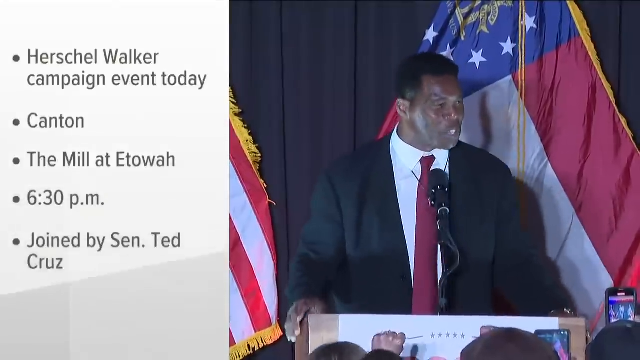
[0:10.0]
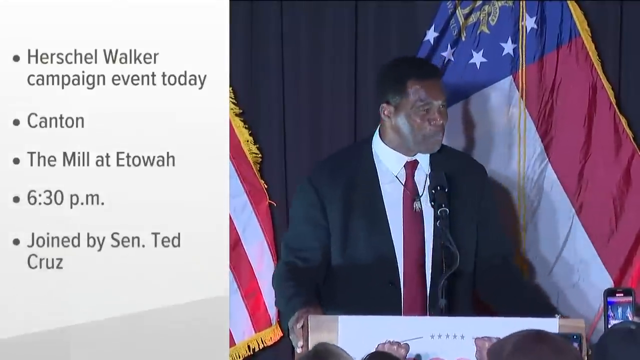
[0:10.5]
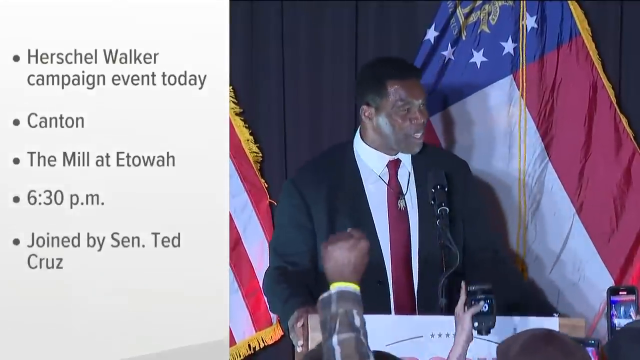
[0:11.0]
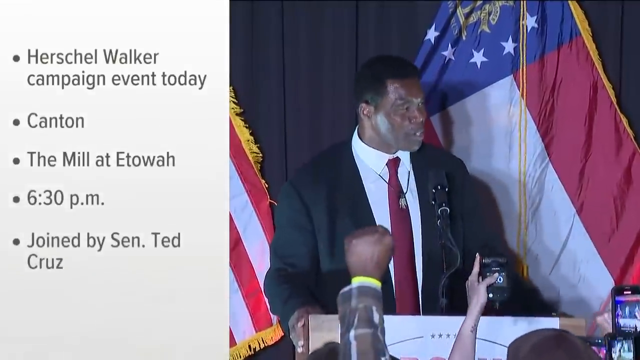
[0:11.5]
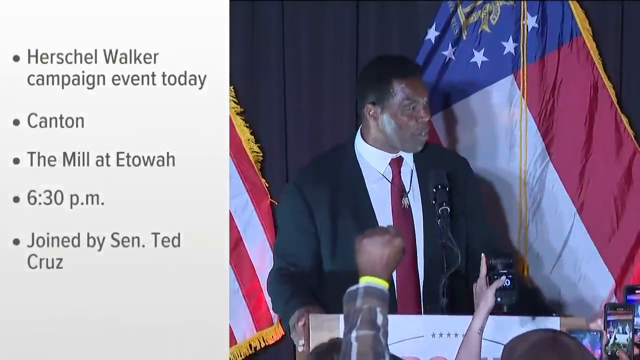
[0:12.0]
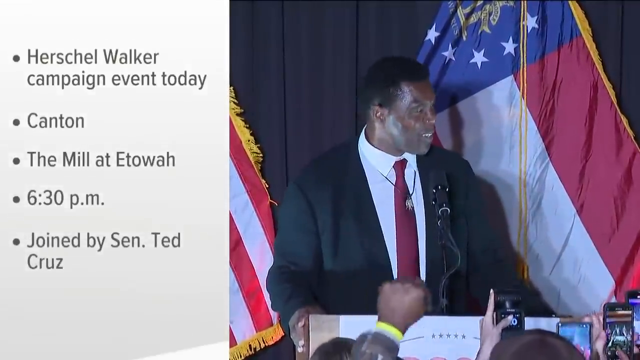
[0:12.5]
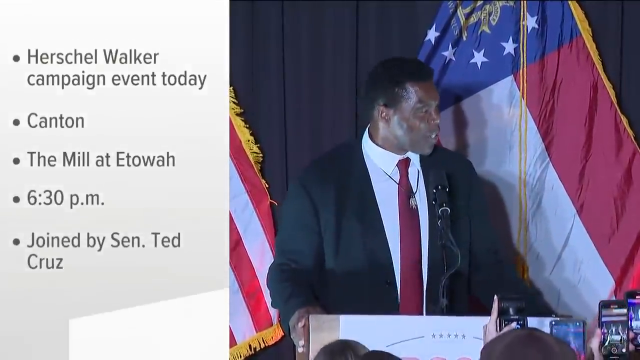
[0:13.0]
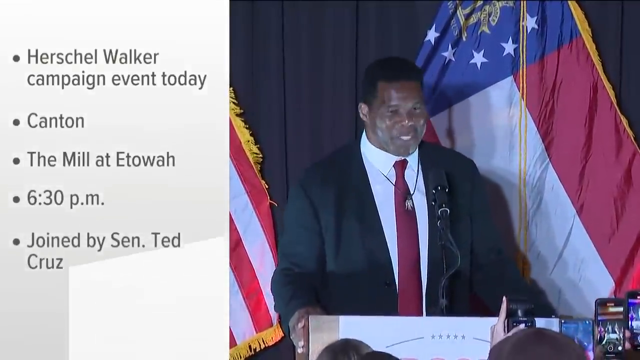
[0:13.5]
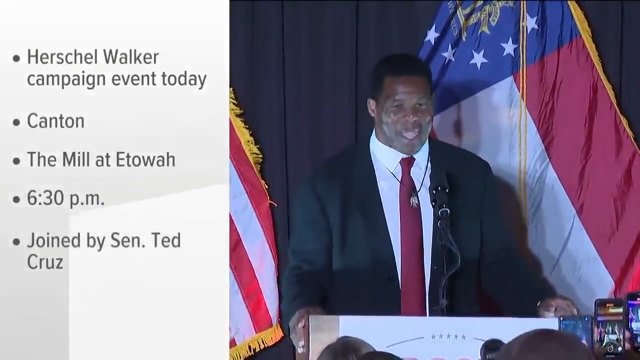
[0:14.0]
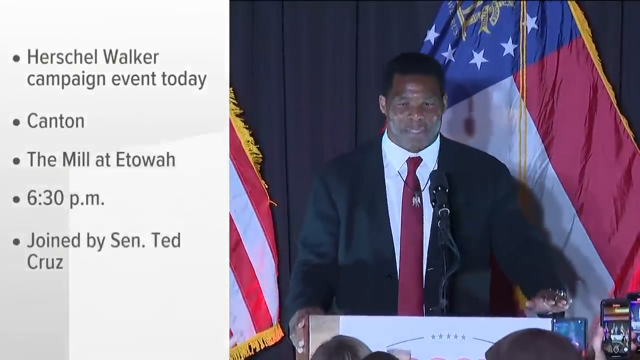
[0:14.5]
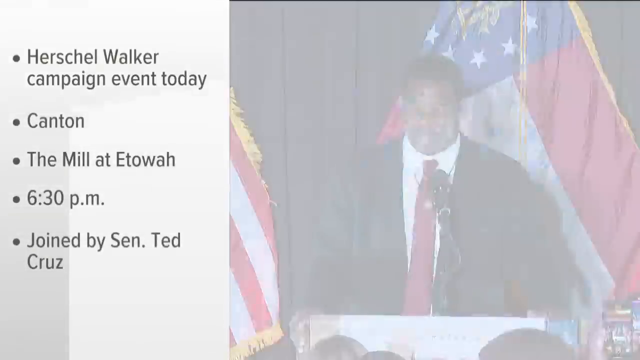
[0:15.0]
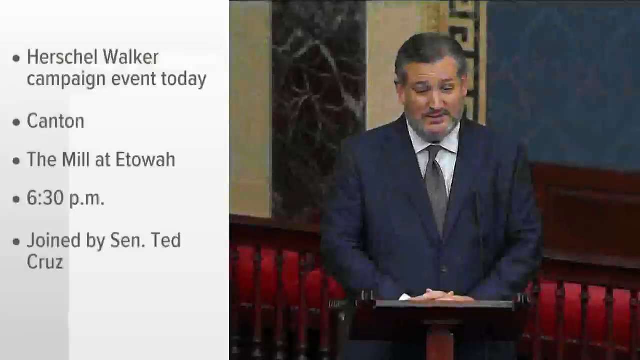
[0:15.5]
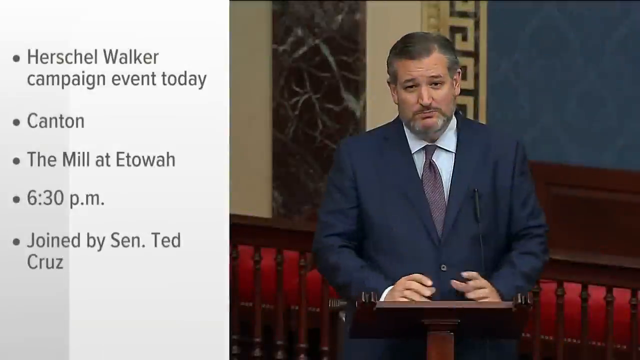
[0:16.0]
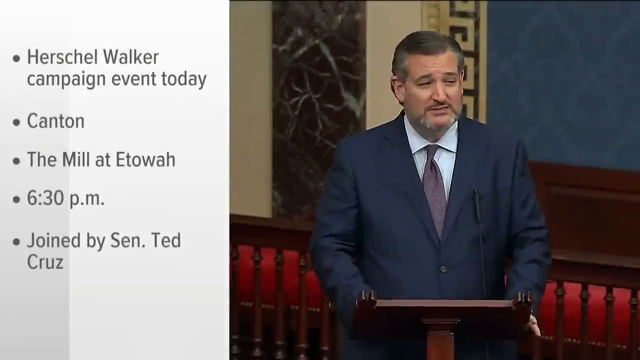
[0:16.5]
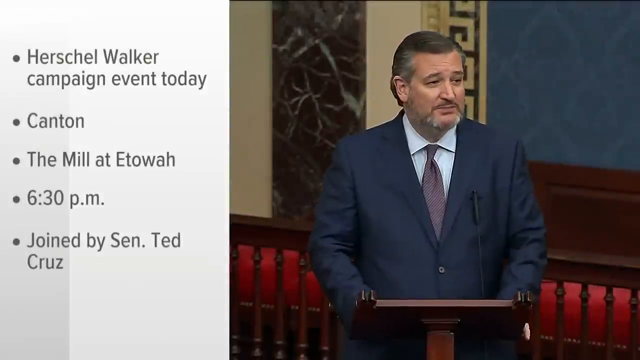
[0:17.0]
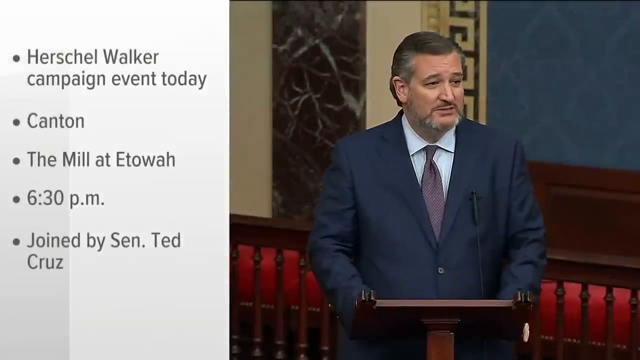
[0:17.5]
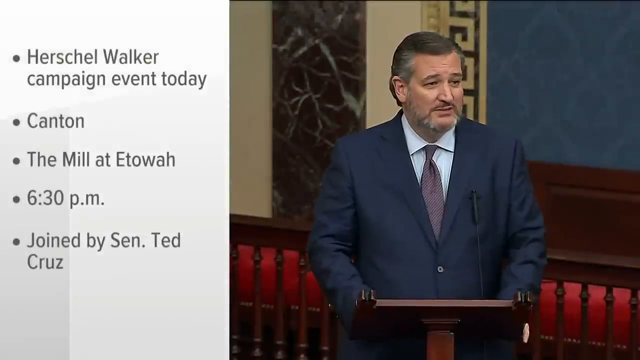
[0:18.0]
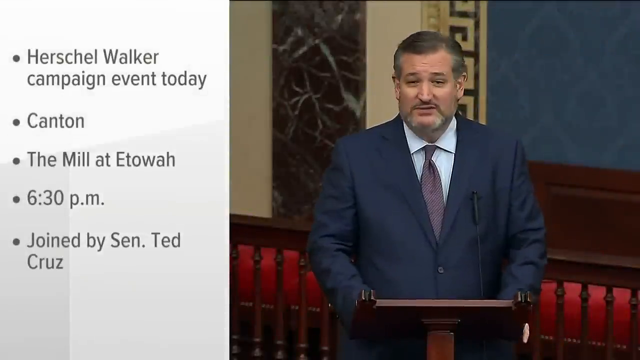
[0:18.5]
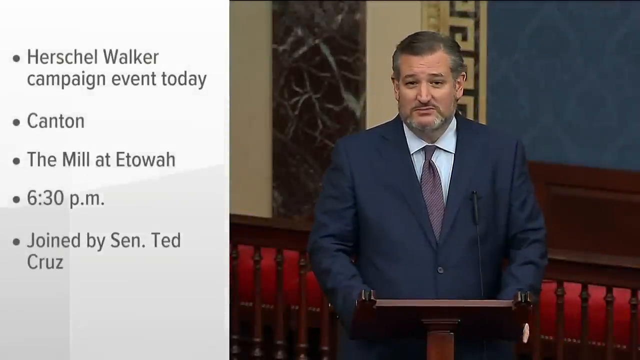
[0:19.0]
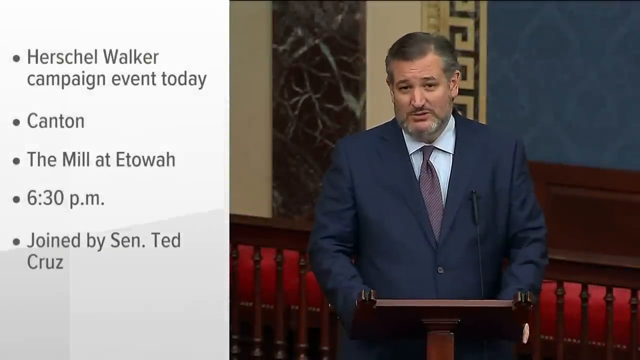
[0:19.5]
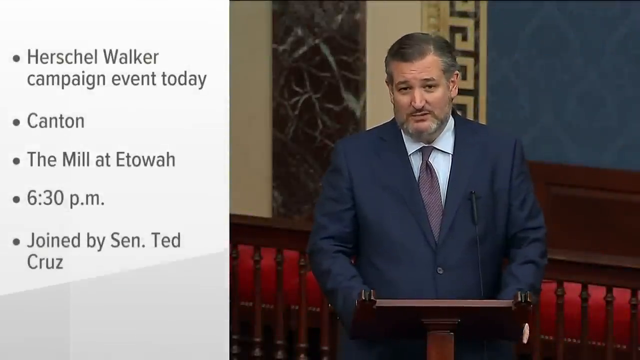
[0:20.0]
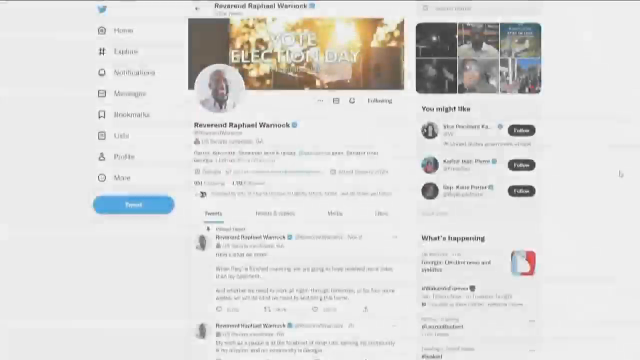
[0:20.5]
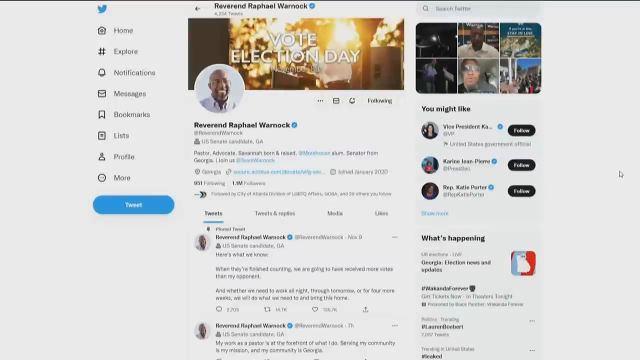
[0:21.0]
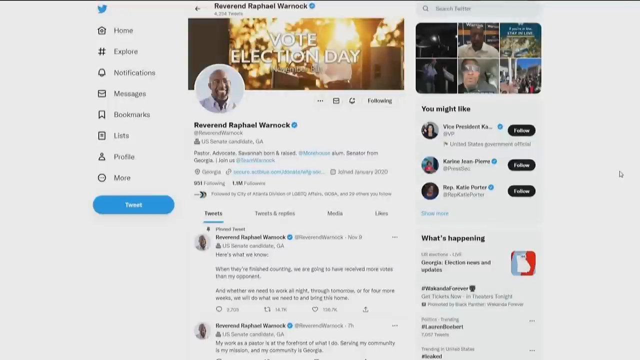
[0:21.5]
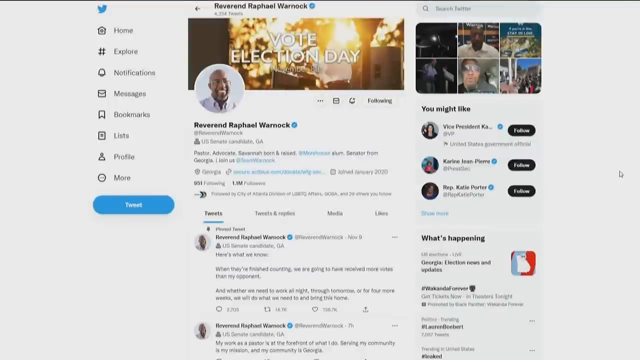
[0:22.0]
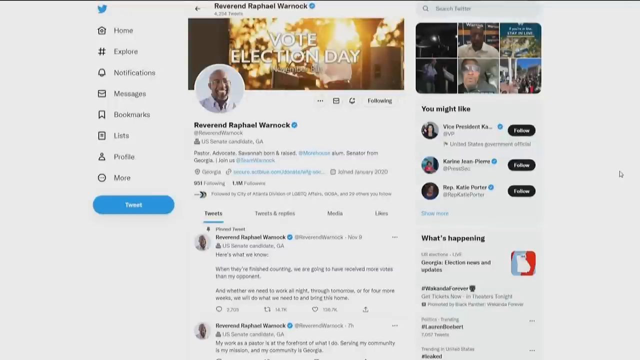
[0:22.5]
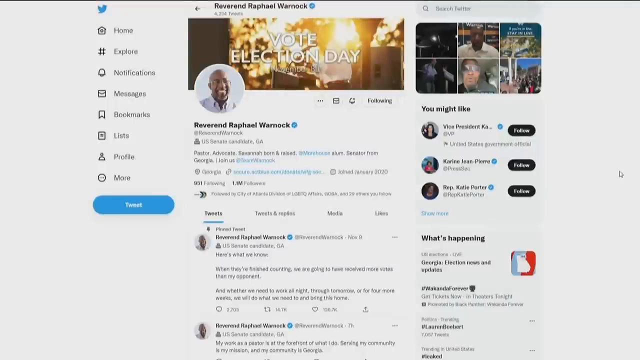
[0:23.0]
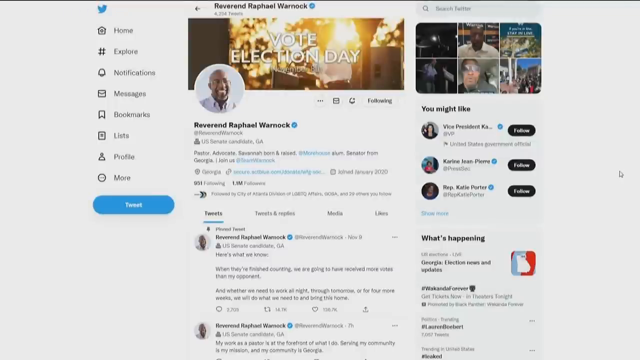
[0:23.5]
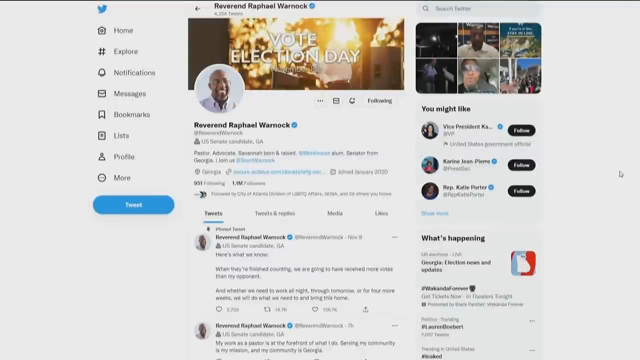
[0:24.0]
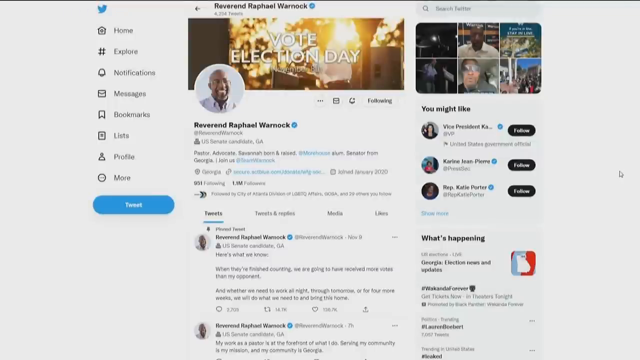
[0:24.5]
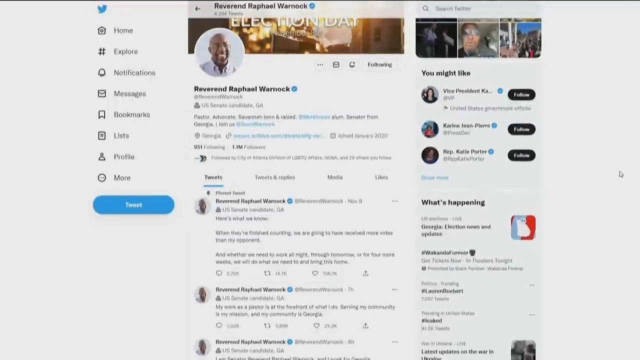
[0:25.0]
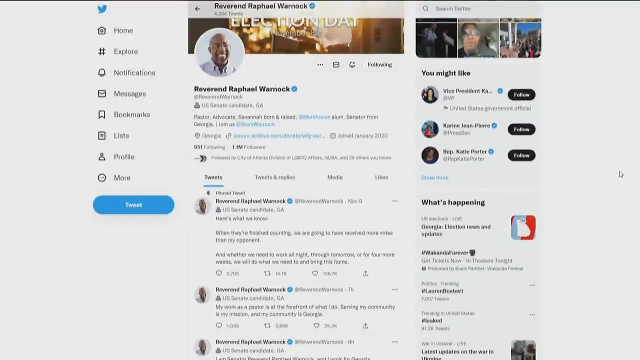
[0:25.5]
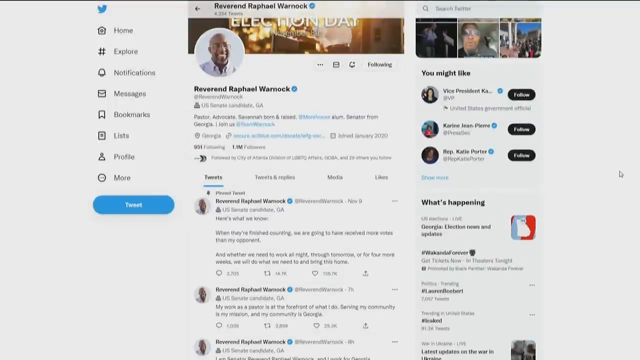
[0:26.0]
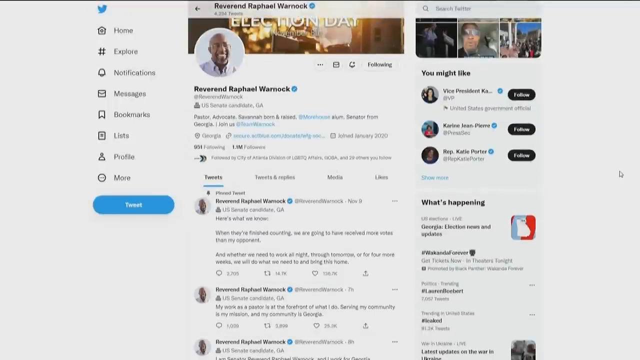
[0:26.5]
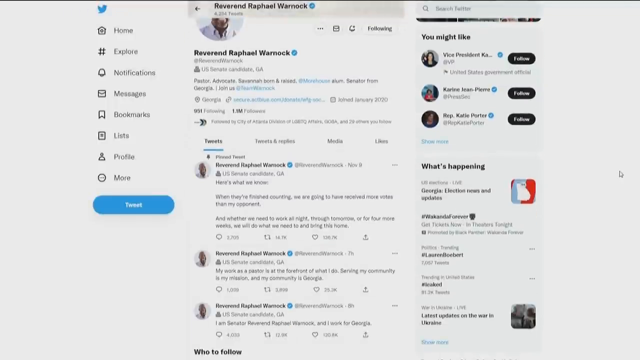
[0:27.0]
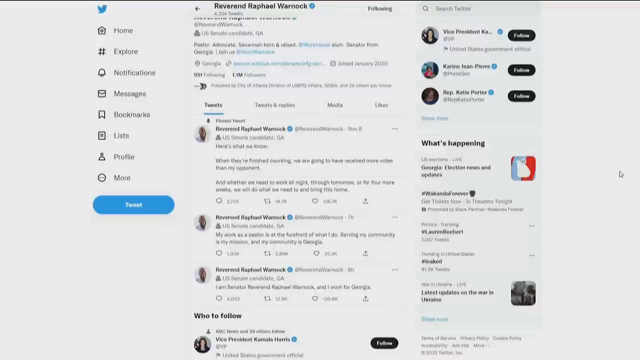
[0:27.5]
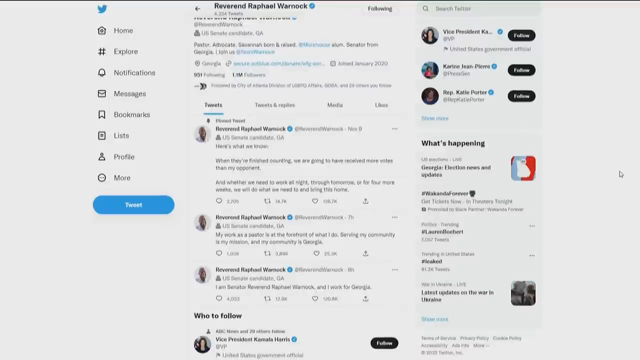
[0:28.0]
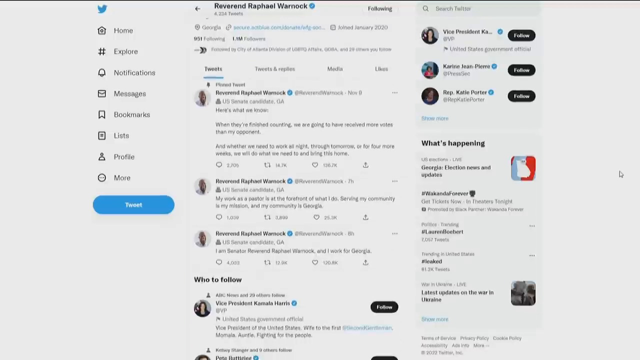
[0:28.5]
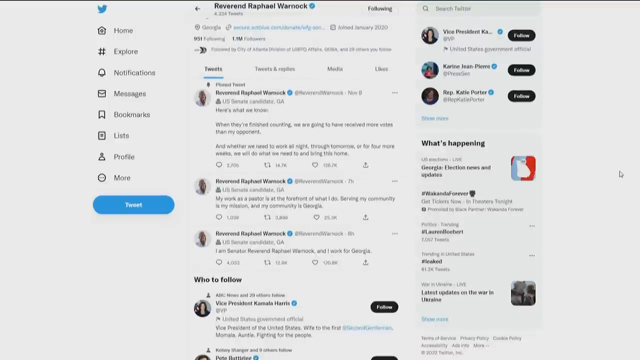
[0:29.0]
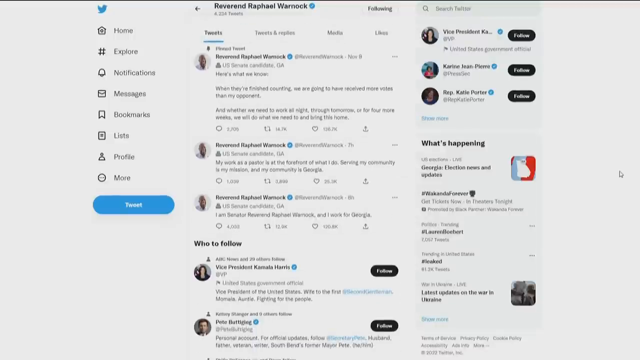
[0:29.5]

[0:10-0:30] A video of Herschel Walker appears alongside bullet-point text about a Herschel Walker campaign event today in Canton, at the mill in Etowah at 6:30, joined by Senator Ted Cruz. On the right side, the video shows Herschel Walker speaking in front of an audience. The next shot shows Ted Cruz in the Senate, wearing a blue suit. It then cuts to the Twitter page of Rafael Warnock, a Democratic politician running against Walker. The account is verified, with a blue check next to his name. It is a standard Twitter page with a white background, showing home, explore, notifications, messages and bookmarks buttons, a picture of Rafael Warnock, and a short introduction. A top banner reads "vote election". The user scrolls down the page until it reaches the follow section.